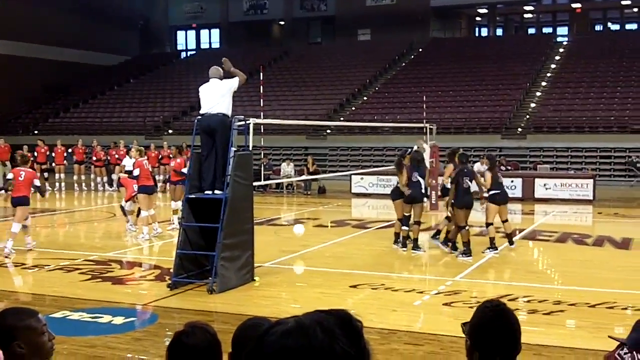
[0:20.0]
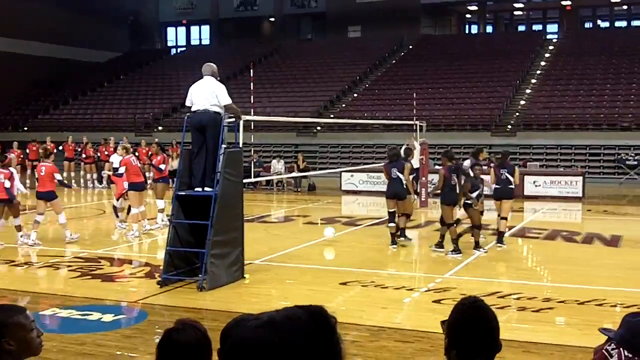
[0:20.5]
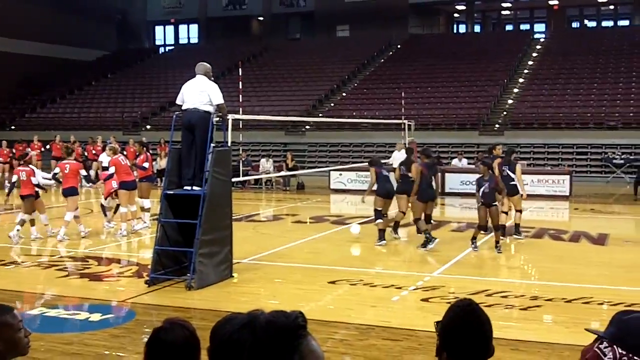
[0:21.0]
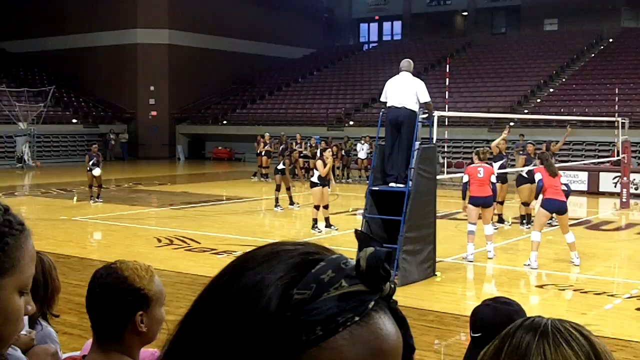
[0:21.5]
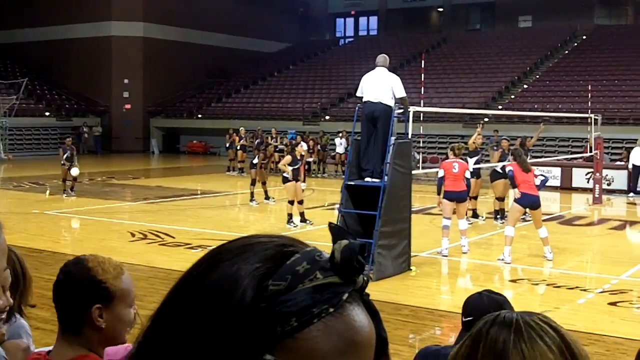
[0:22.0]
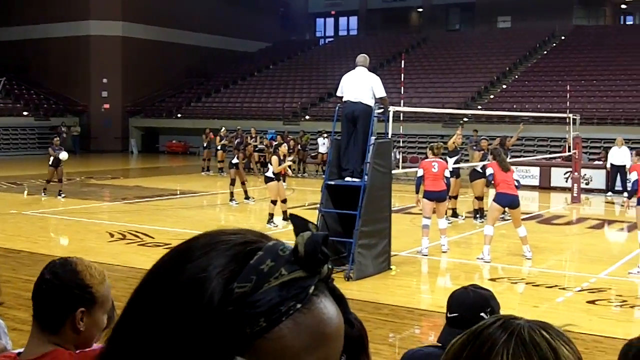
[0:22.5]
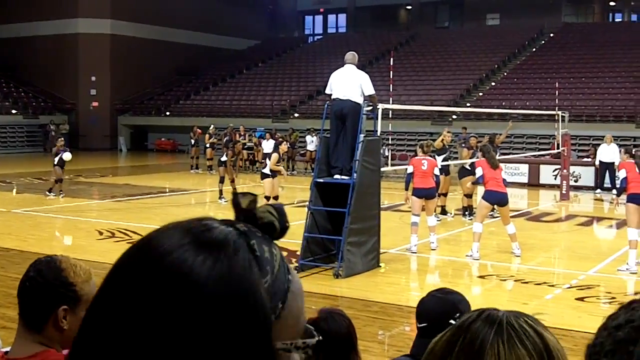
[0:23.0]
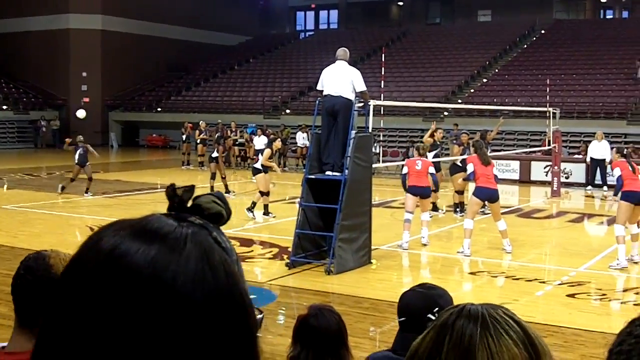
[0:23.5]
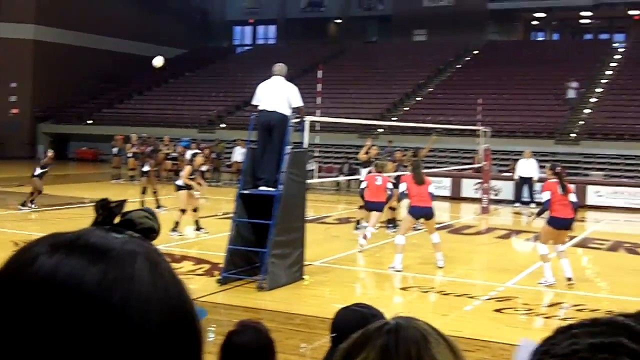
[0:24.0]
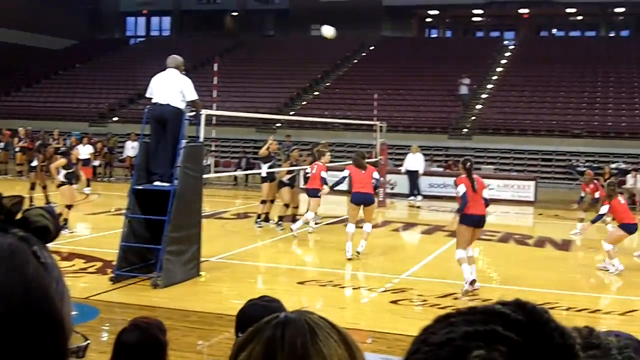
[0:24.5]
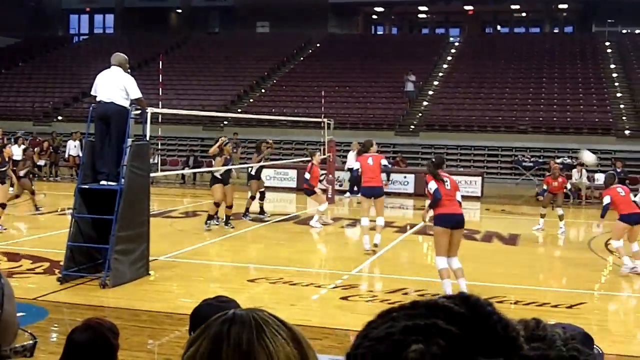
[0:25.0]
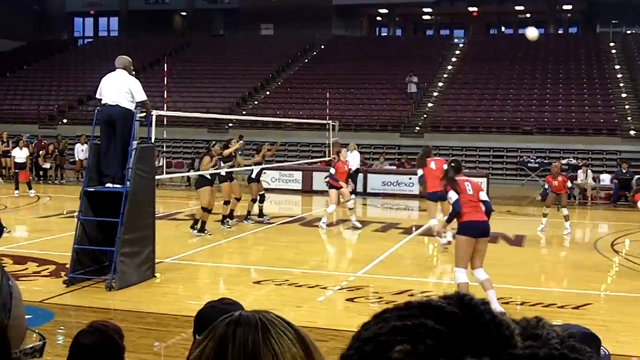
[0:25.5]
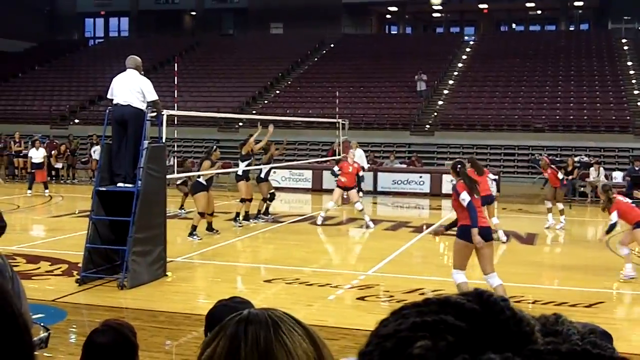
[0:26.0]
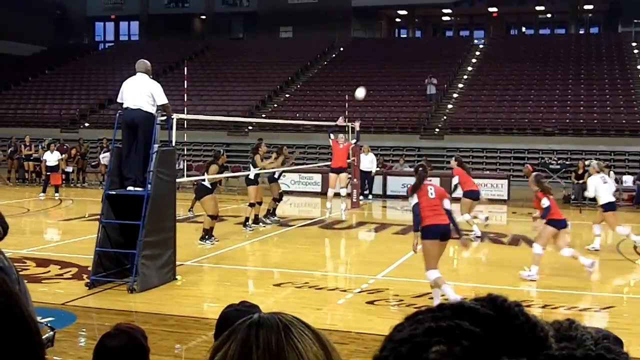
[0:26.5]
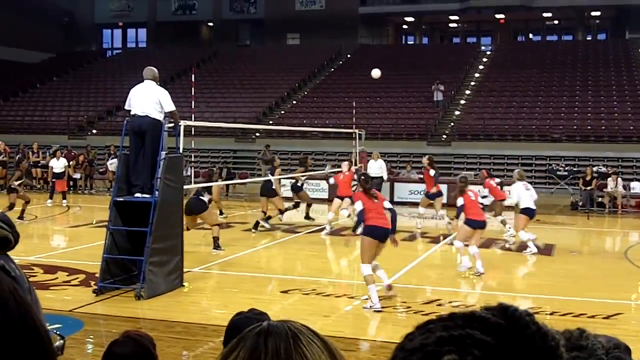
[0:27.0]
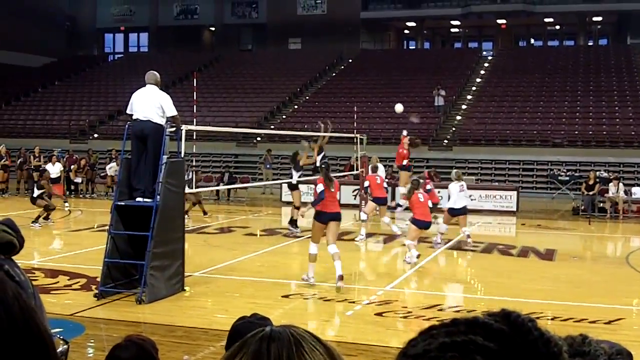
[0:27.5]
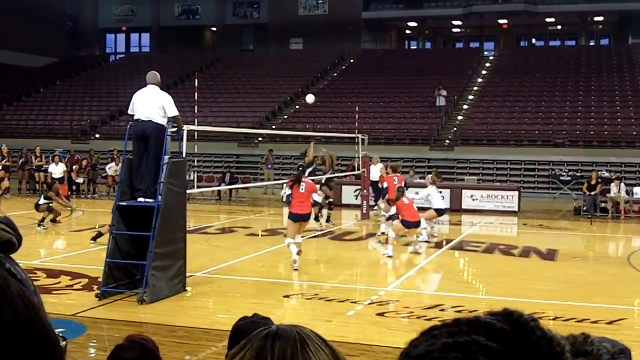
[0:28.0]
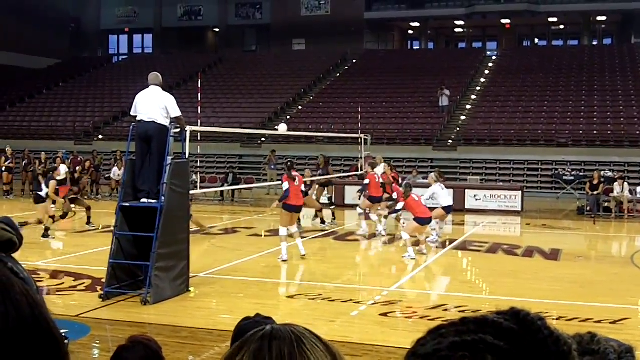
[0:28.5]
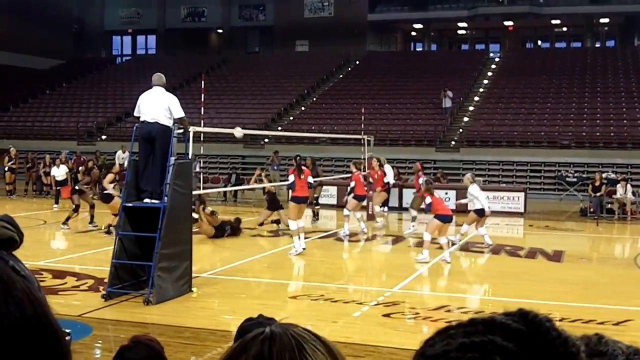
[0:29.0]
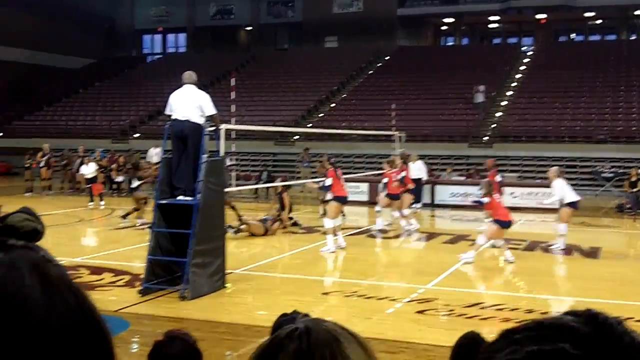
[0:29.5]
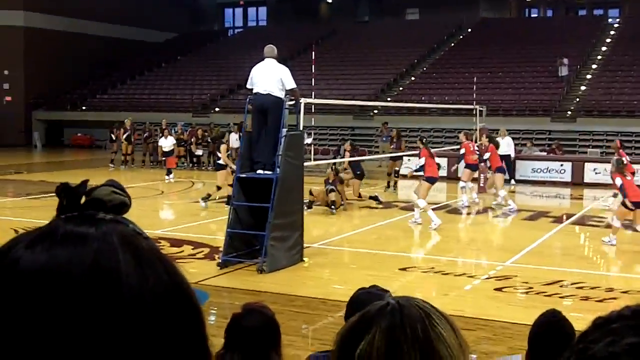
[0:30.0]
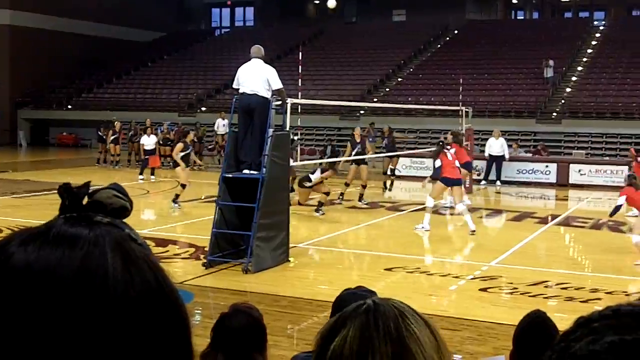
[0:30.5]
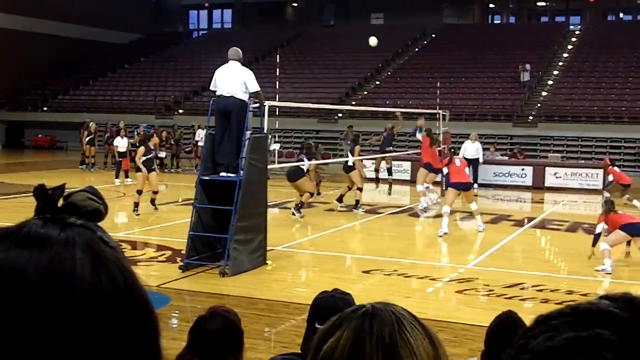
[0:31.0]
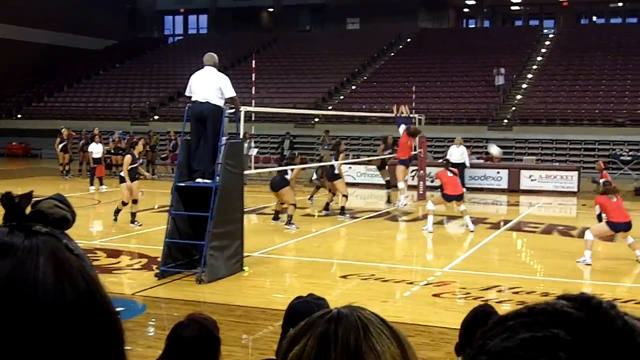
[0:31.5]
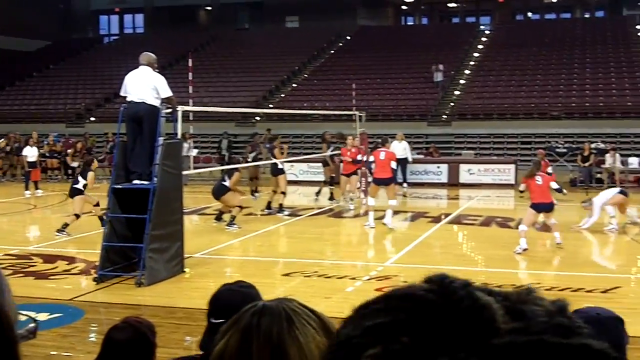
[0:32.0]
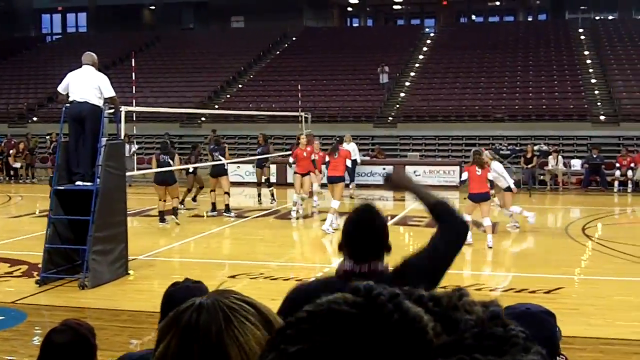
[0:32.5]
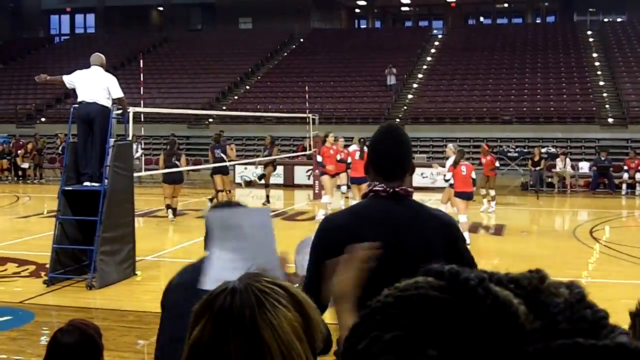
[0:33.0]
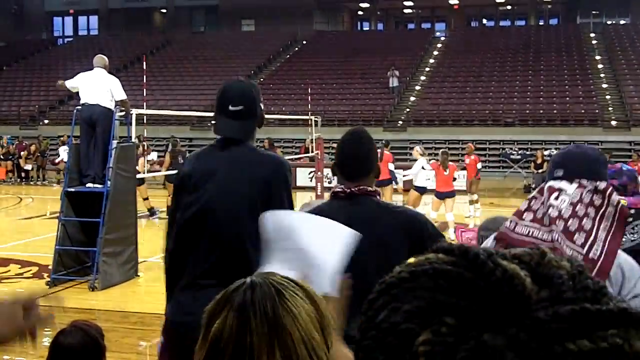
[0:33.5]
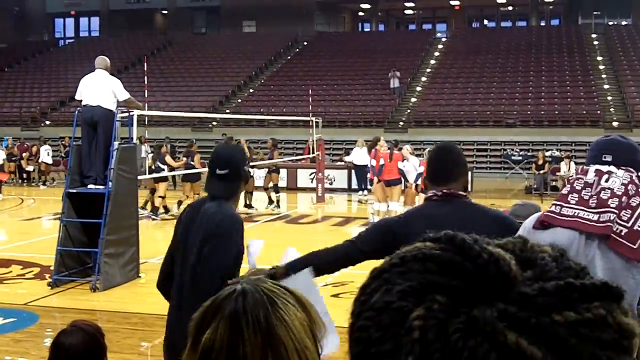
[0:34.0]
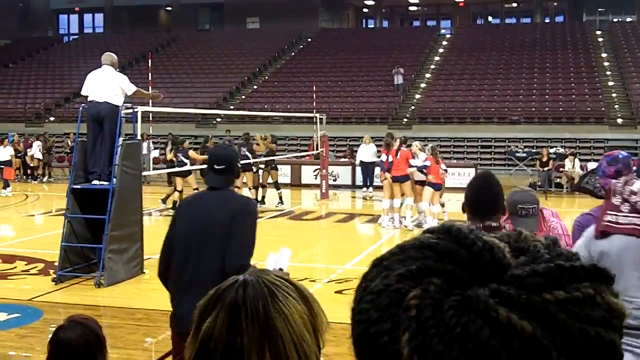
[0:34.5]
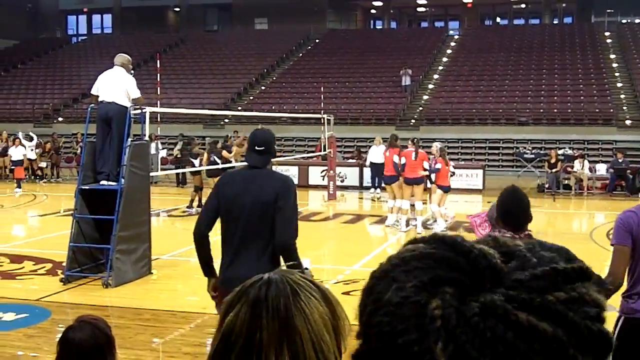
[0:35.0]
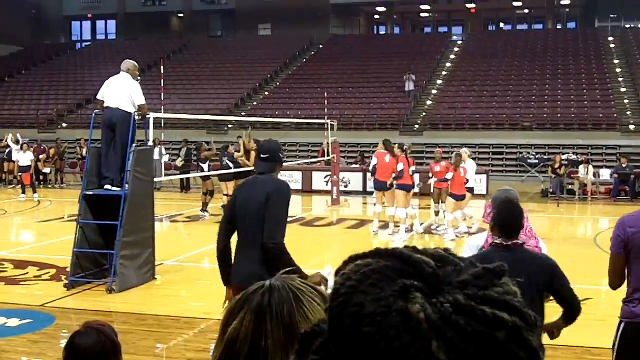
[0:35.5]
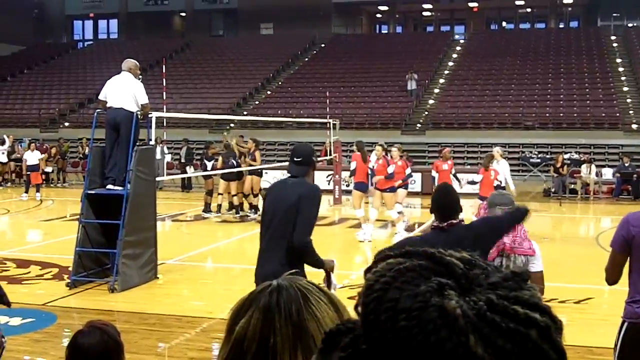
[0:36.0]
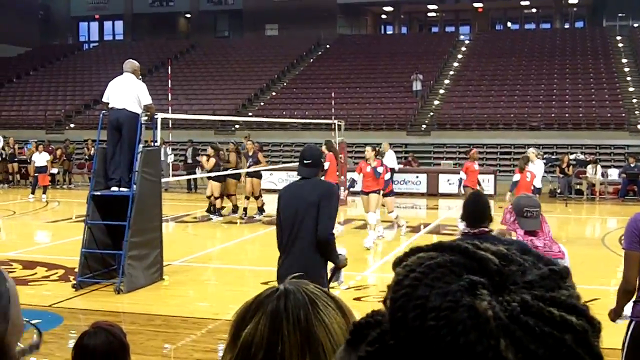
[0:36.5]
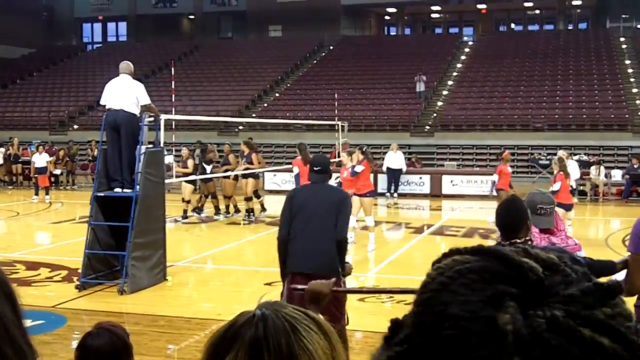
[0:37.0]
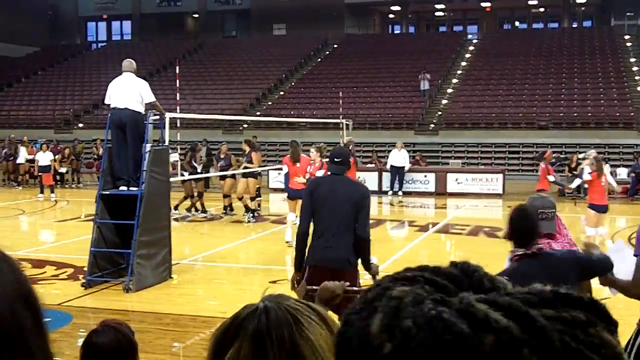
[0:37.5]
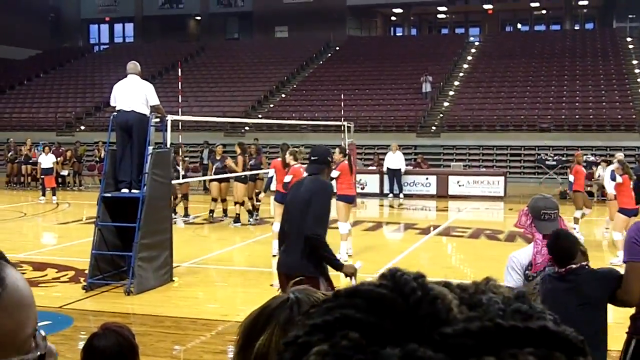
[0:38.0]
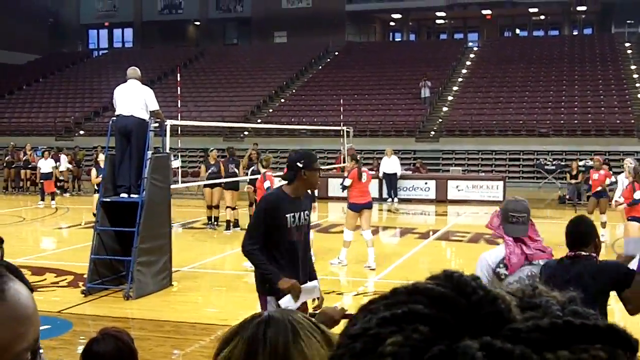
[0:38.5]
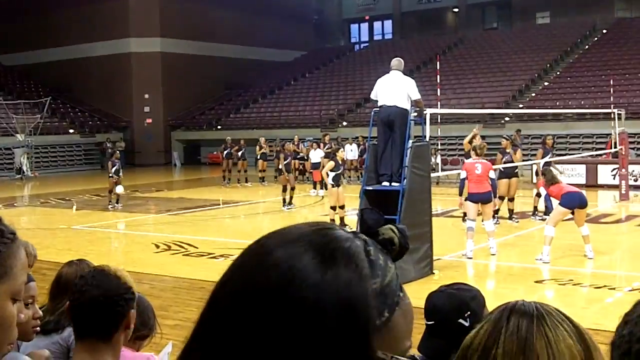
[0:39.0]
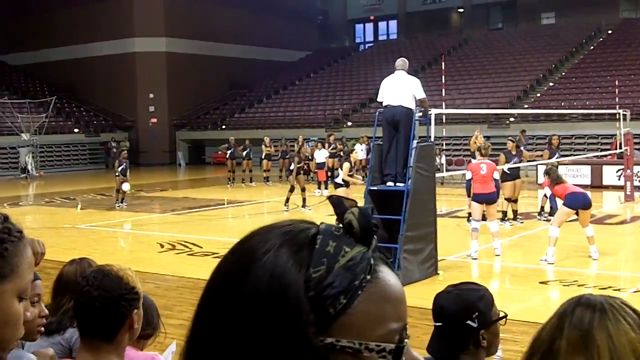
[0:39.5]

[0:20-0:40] A girls' volleyball game, apparently at the college level, is played between a red team and a team in black jerseys. The stands are completely empty except for spectators on the side closest to the camera, of whom only the tops of a few heads are visible until the black team hits the winning point; then the front row stands up and cheers, and two of the spectators kind of walk onto the floor as they cheer. How many spectators there are is not visible. The referee, in black pants and a white shirt and seen only from behind, stands on some steps leading up to a very small podium, watching the game and making the calls. Players who are apparently not playing watch from the sideline, and of the coaches, one sits calmly while another appears to be standing.